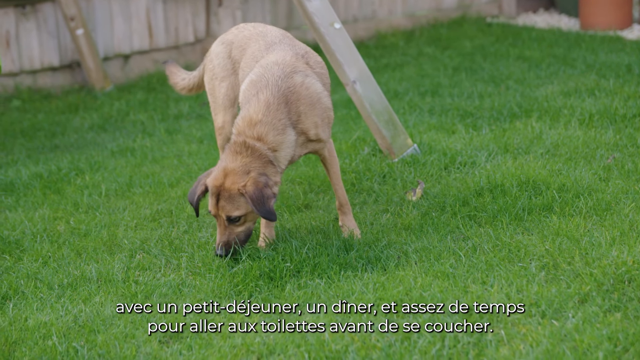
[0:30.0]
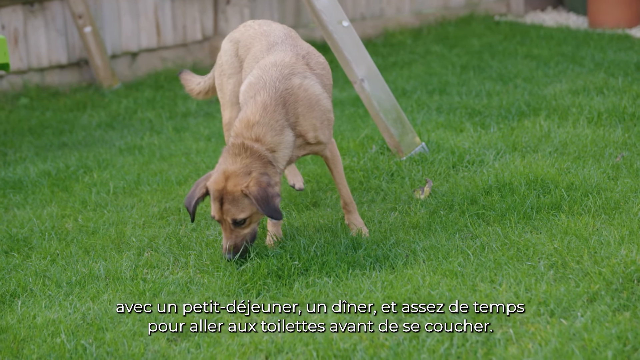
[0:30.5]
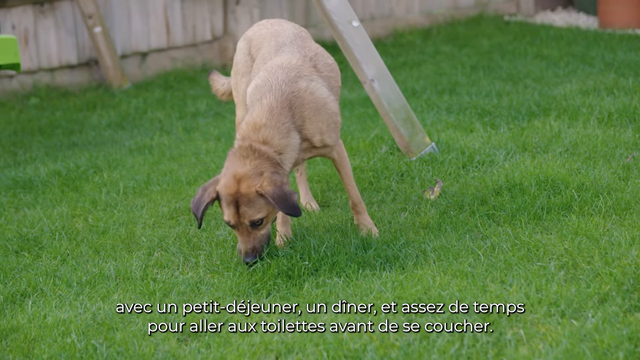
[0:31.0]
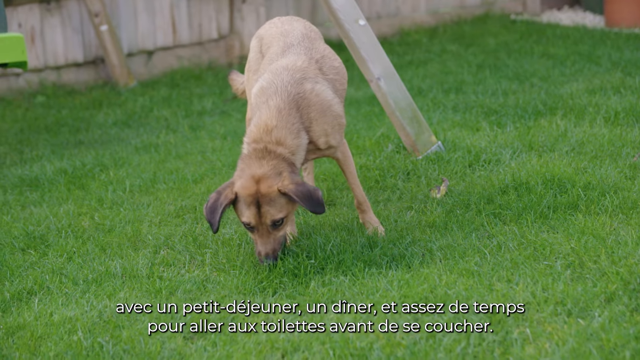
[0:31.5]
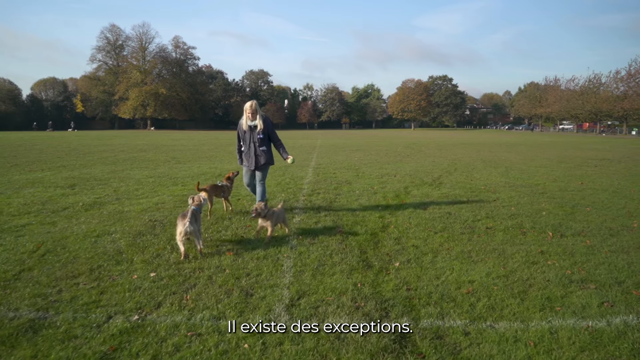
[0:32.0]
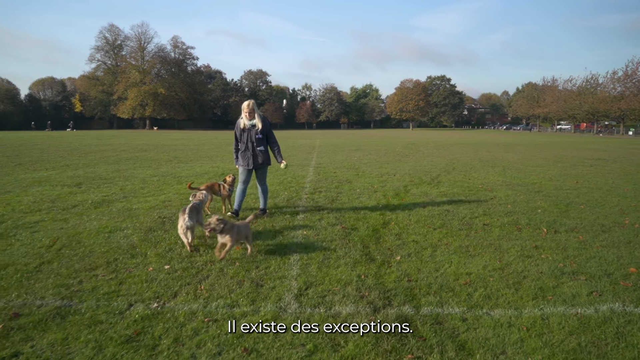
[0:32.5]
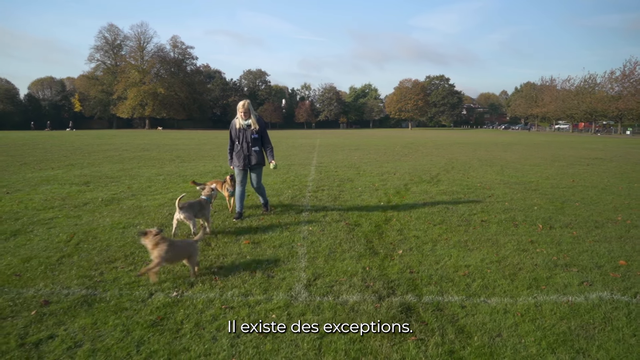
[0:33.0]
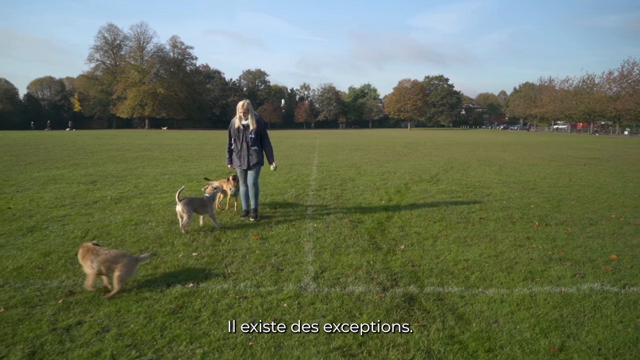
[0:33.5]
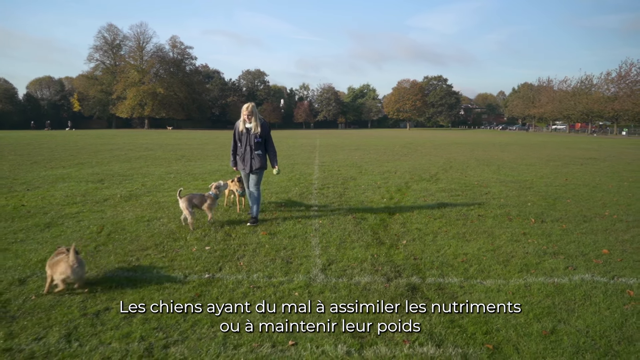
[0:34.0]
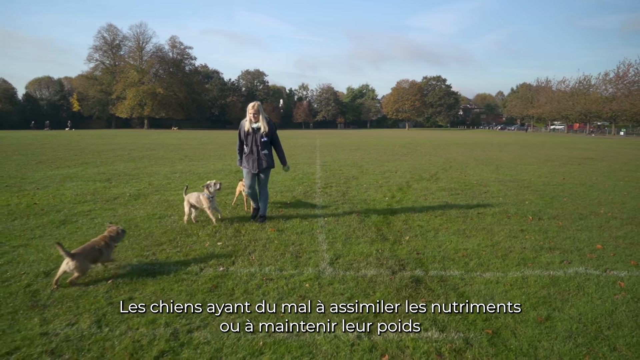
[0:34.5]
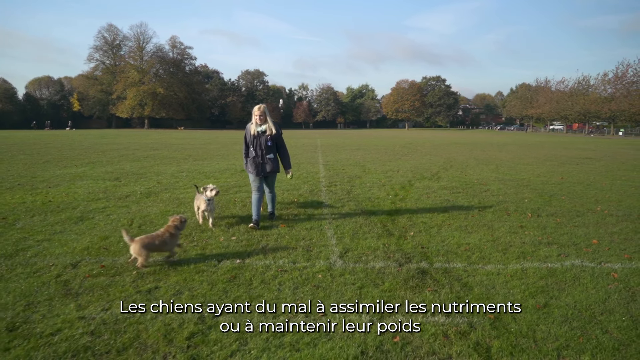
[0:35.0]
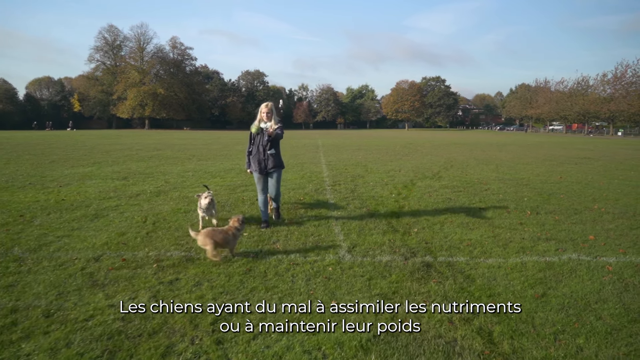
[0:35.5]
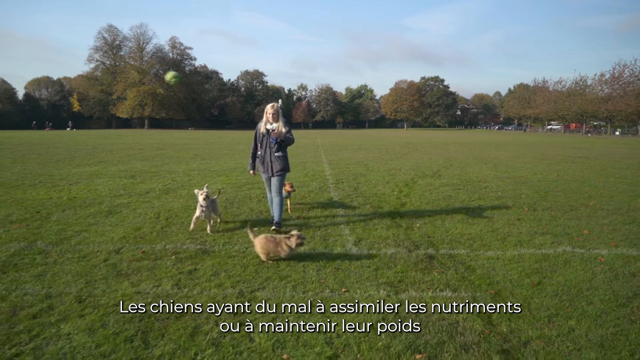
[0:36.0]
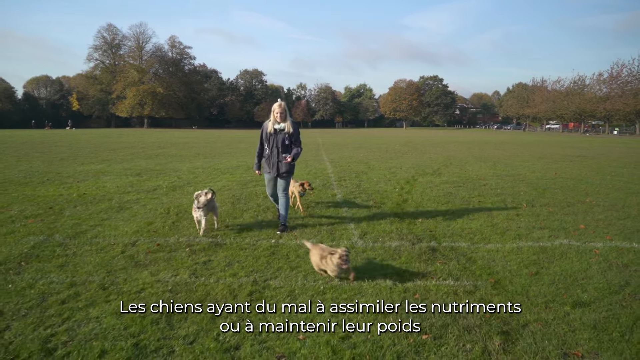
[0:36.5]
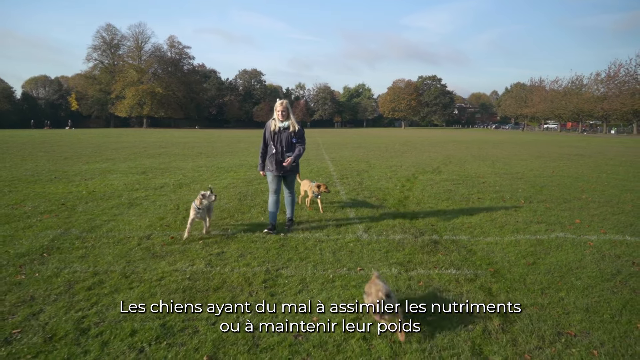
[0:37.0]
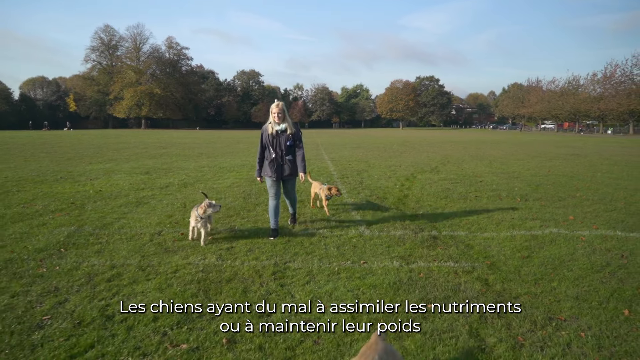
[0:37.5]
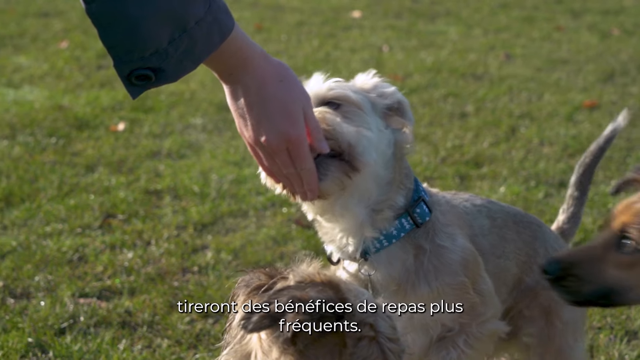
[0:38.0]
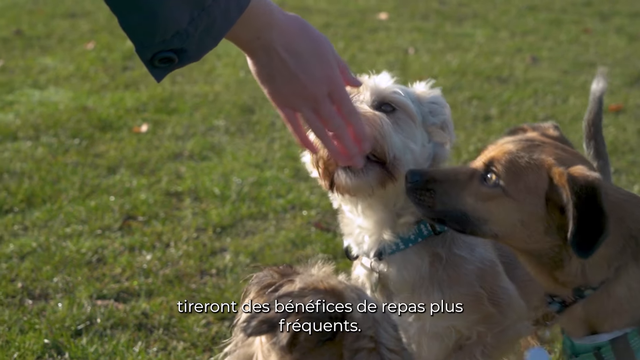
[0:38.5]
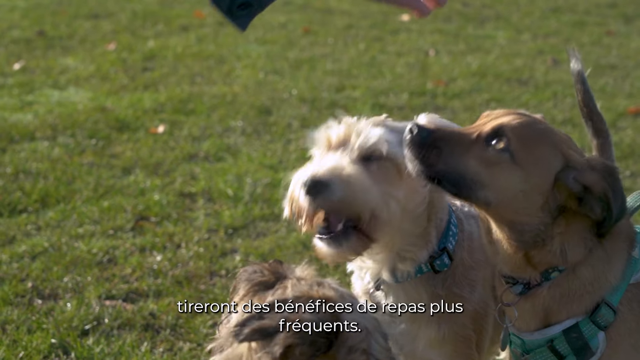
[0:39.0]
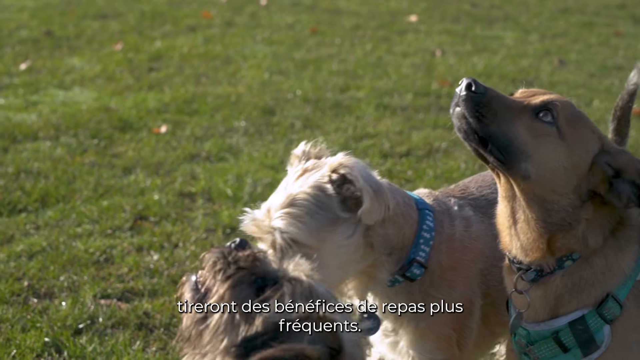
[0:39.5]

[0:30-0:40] A medium-sized, short-haired, tan-coloured dog is in a green, grassy back garden, sniffing around on the ground. The scene changes to a large, grass-covered park area with trees in the background under a blue daytime sky. A woman with shoulder-length blonde hair, wearing a coat and jeans, walks on the grass surrounded by her three dogs: a small white dog, a small light brown dog and a medium-sized, tan-coloured dog. They run around her as she throws a yellow ball off into the distance. The footage then changes to show the woman feeding the three dogs from her hand; it is not clear what she is feeding them.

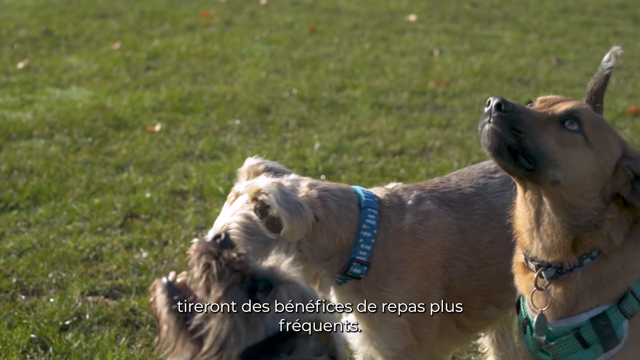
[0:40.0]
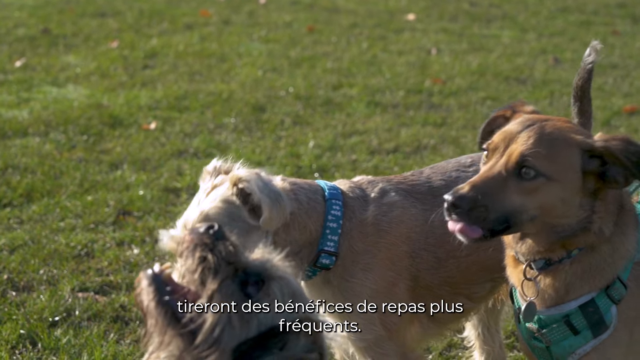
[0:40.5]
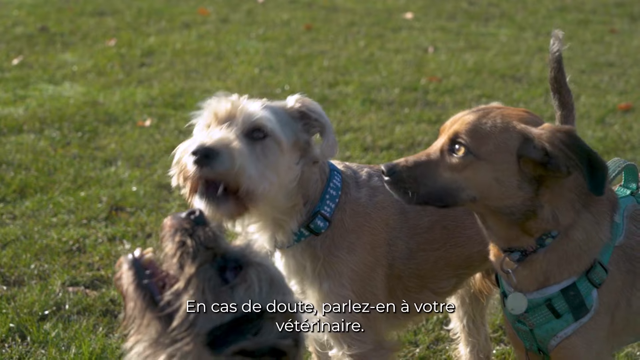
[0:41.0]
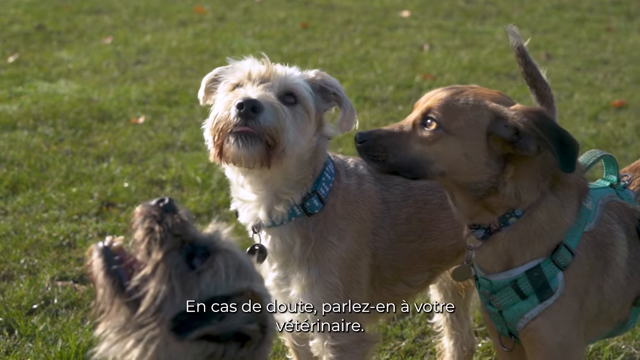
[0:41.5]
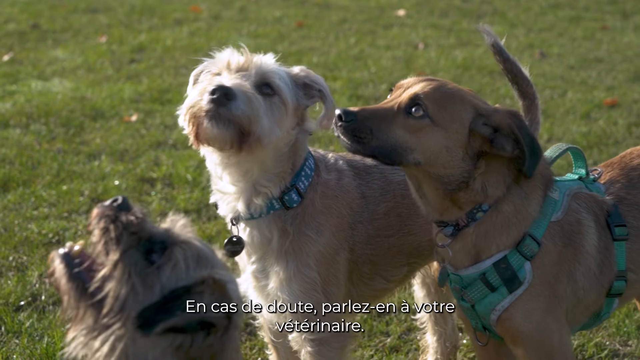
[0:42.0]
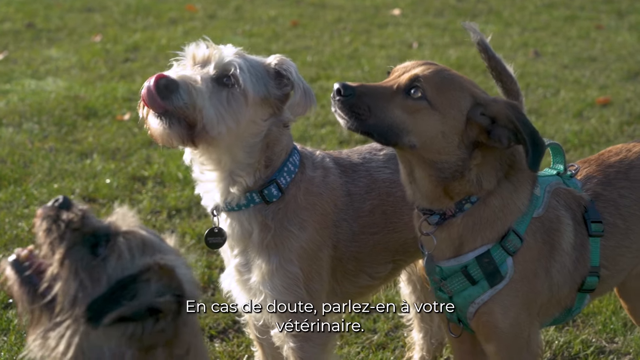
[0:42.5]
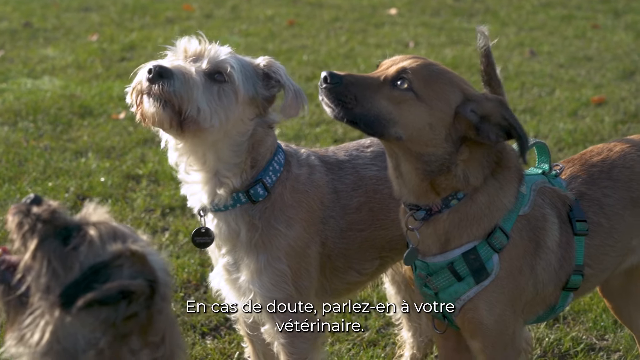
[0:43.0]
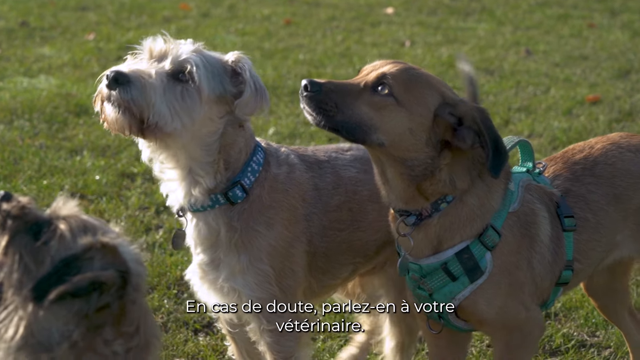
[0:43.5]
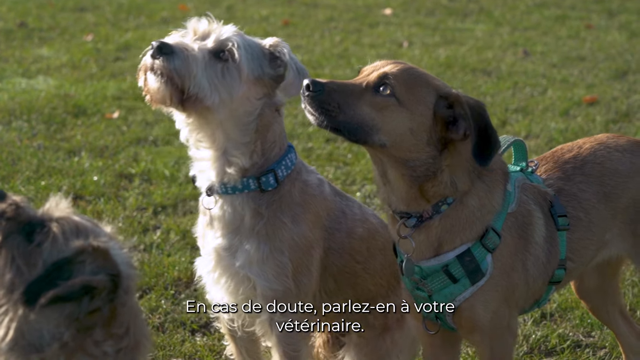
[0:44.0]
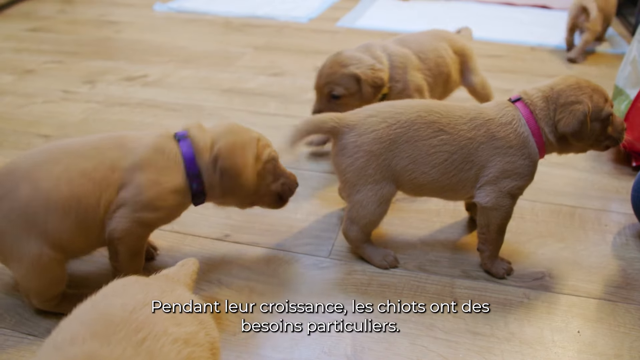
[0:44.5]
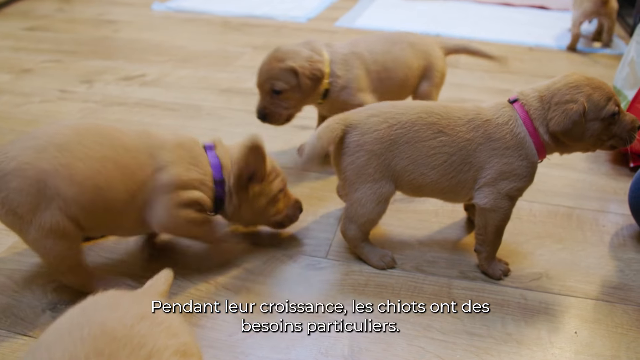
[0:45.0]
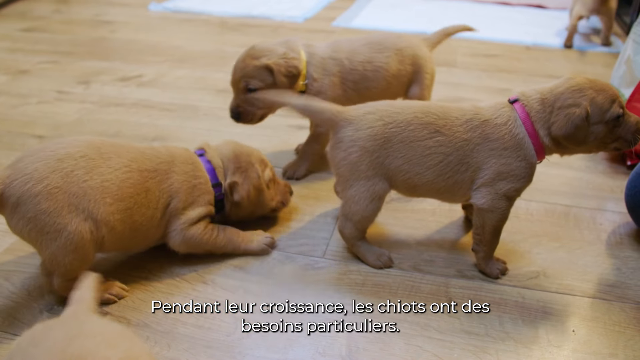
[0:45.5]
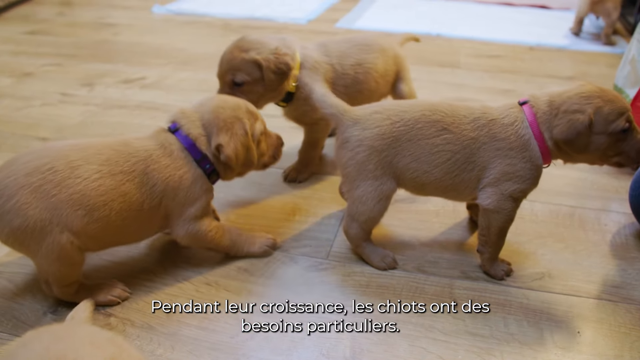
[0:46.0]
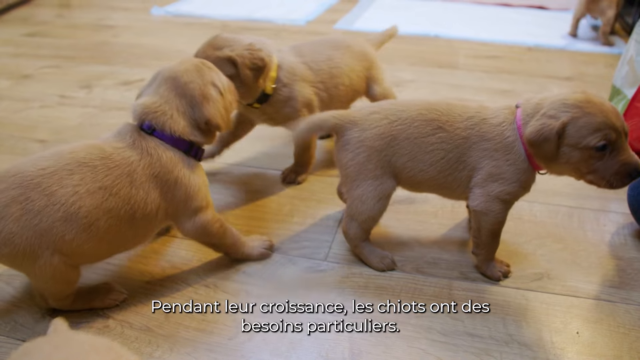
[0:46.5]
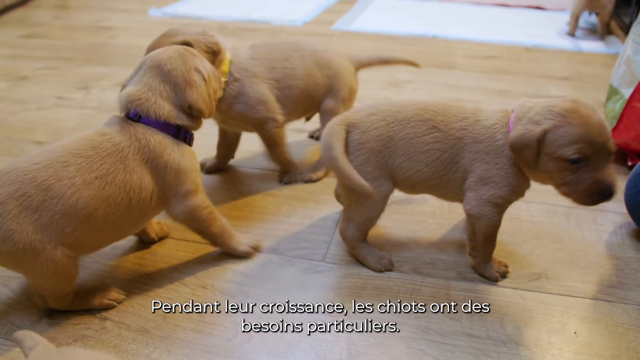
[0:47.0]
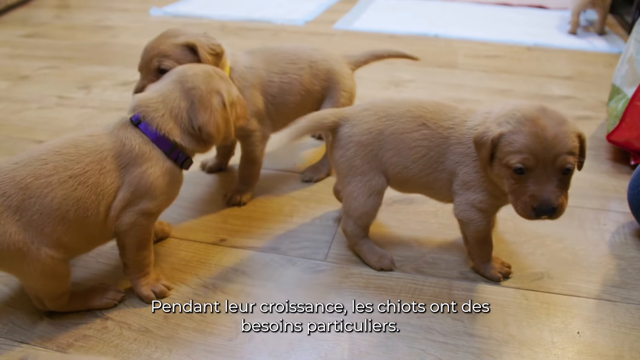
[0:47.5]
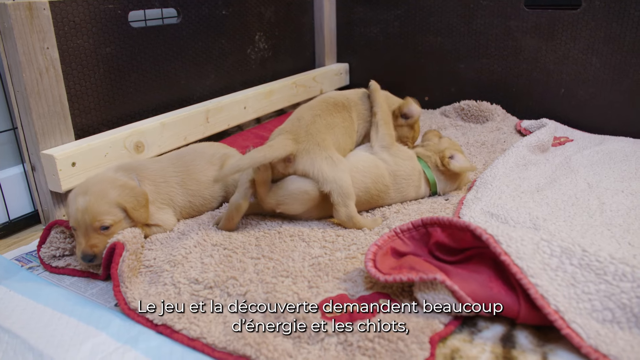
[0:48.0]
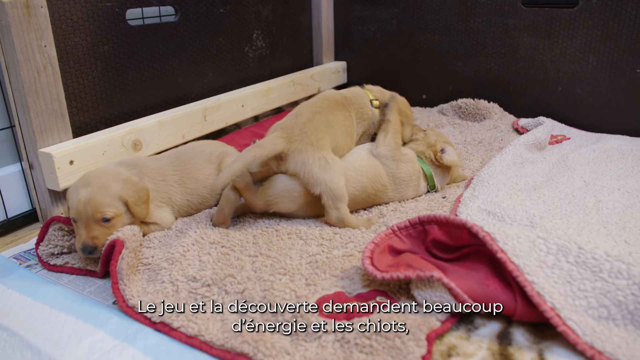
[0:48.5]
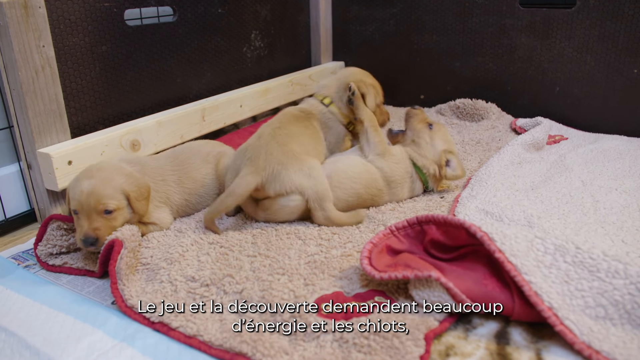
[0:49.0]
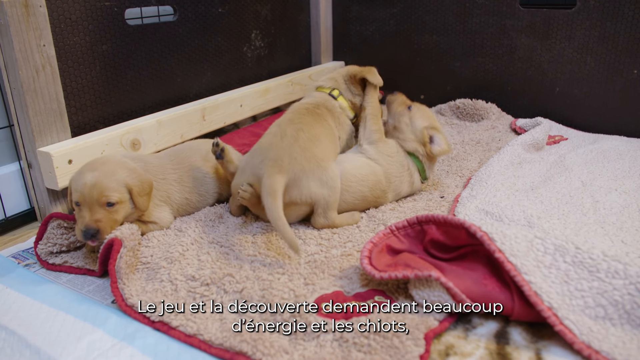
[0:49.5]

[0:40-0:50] Three dogs are outside on a grassy area: a small, light brown, scruffy dog, a small white dog with a blue collar and a medium-sized tan dog. All of them look upwards in a sort of sitting position, looking up to their owner. The footage then changes to small, golden-coloured puppies wearing different-coloured collars. Four puppies are visible, but the focus is on three of them. They are first shown standing on a wooden floor, and then the scene changes to the puppies rolling around and playing together on a soft, blanketed area.